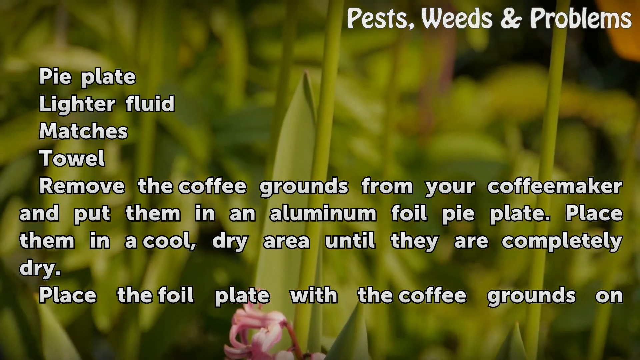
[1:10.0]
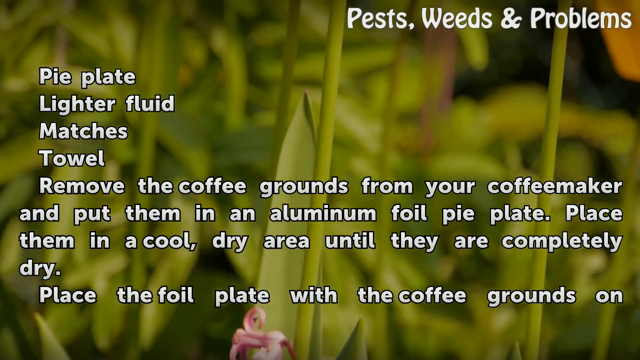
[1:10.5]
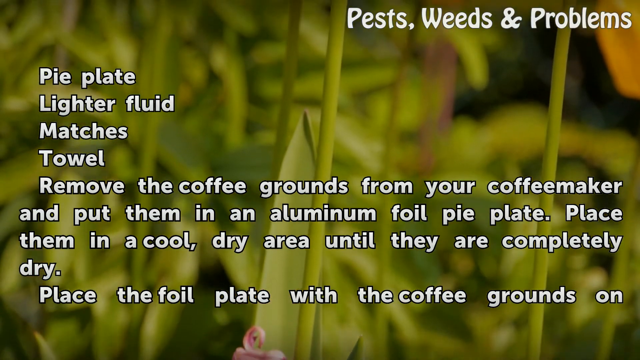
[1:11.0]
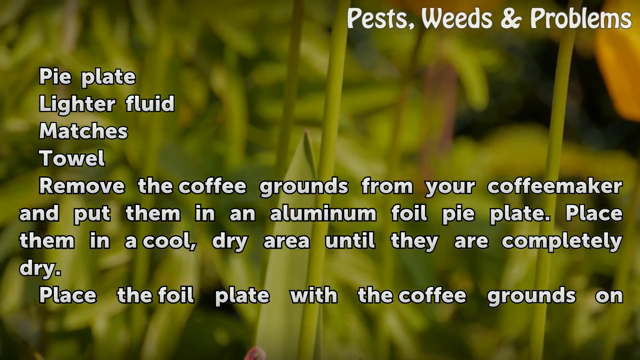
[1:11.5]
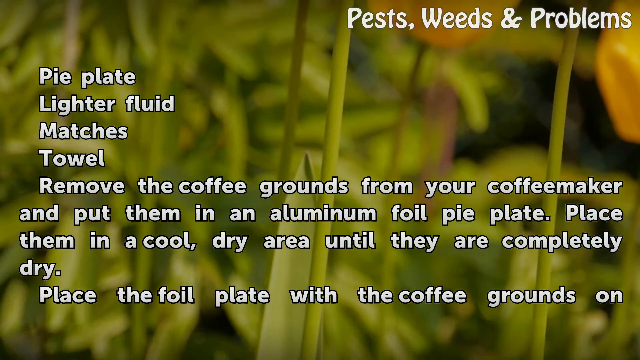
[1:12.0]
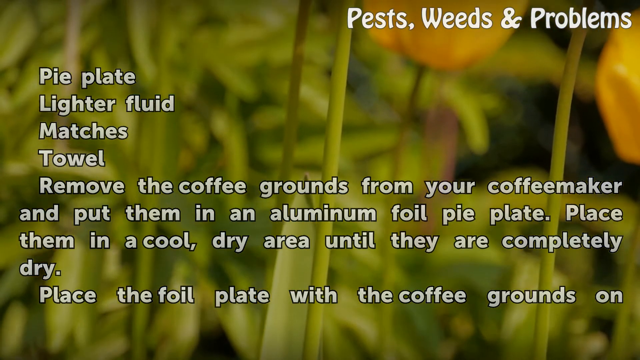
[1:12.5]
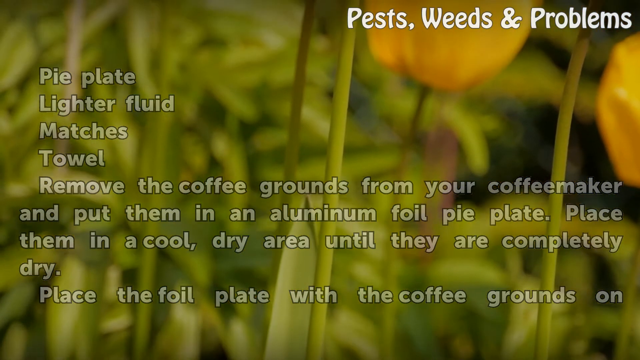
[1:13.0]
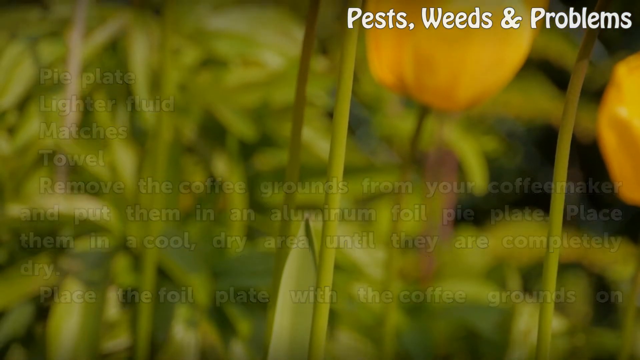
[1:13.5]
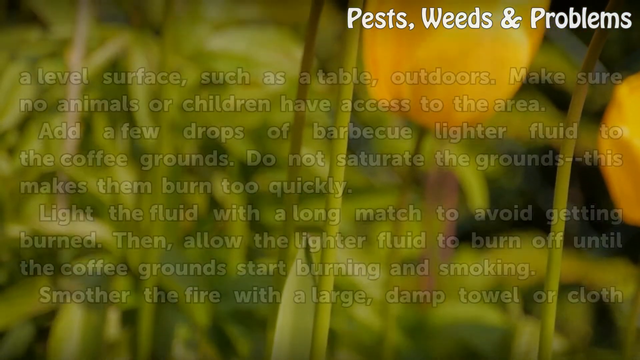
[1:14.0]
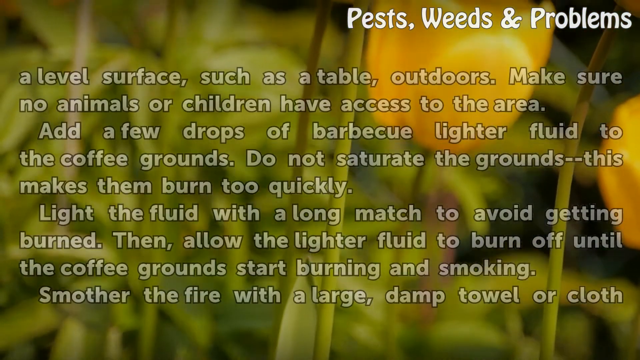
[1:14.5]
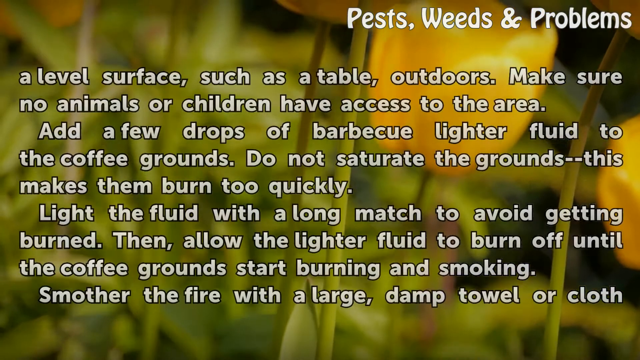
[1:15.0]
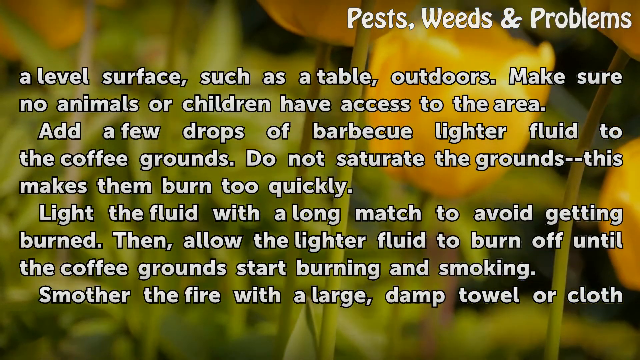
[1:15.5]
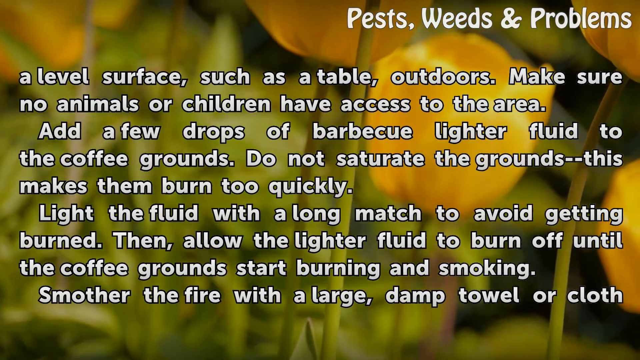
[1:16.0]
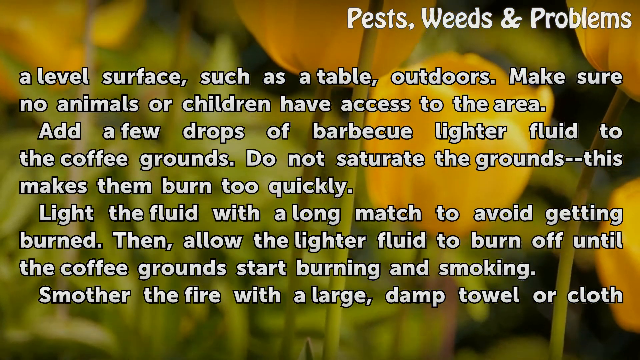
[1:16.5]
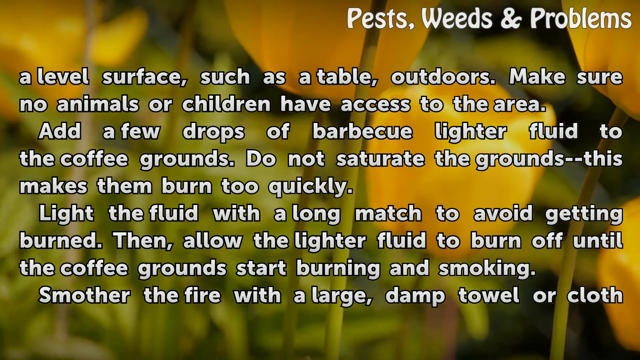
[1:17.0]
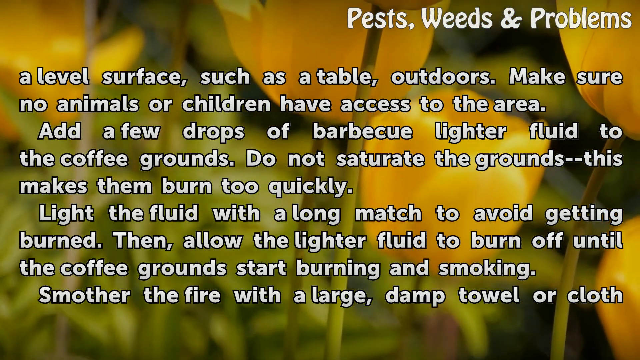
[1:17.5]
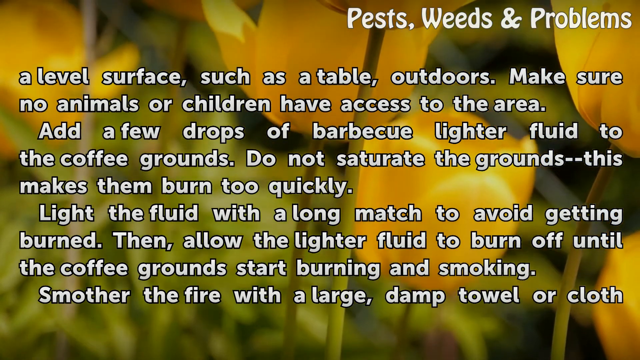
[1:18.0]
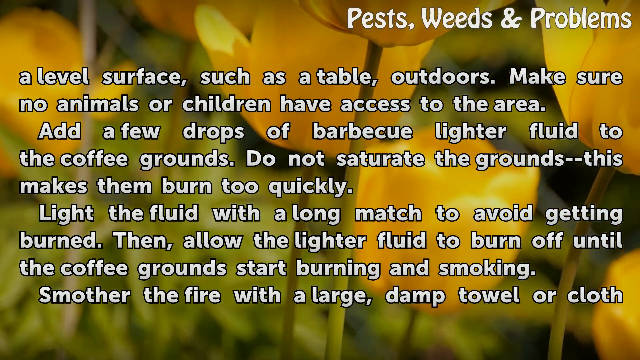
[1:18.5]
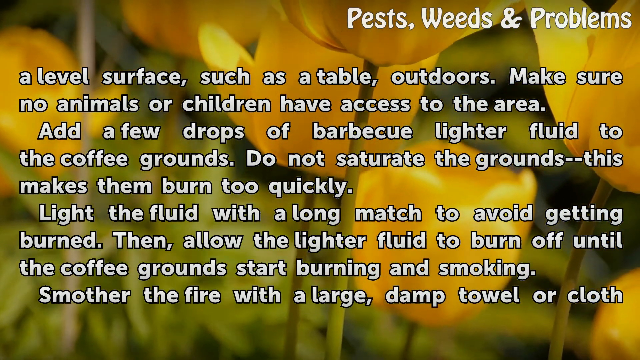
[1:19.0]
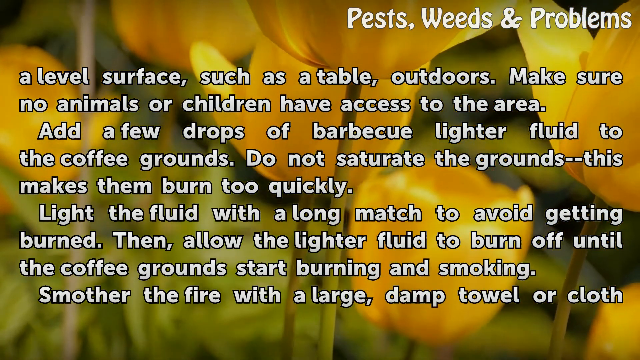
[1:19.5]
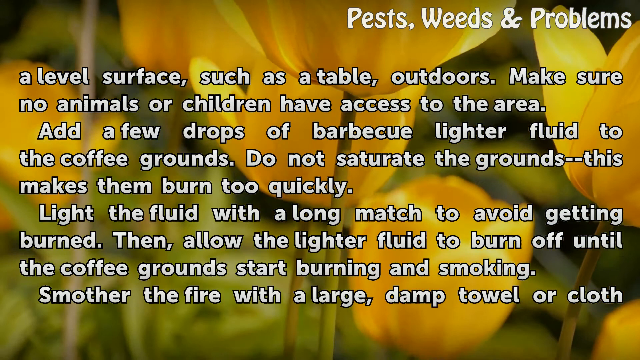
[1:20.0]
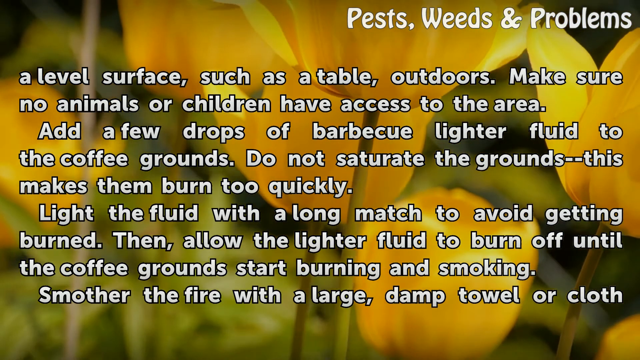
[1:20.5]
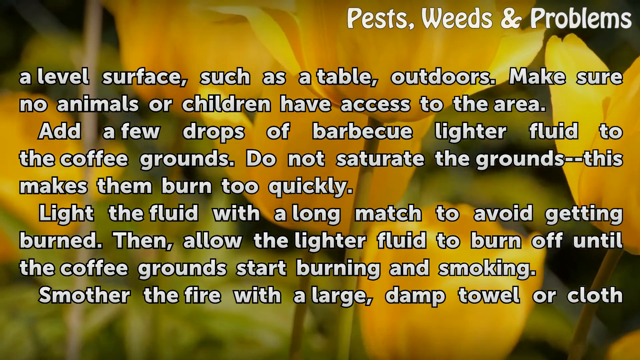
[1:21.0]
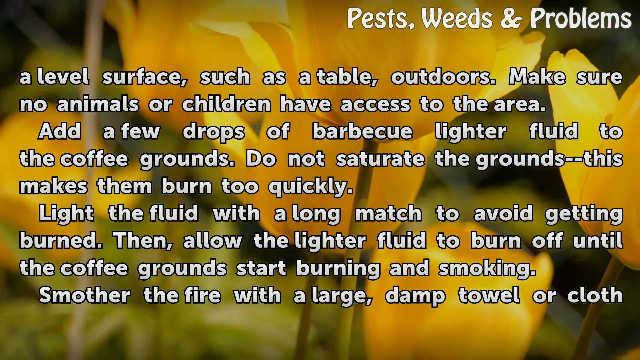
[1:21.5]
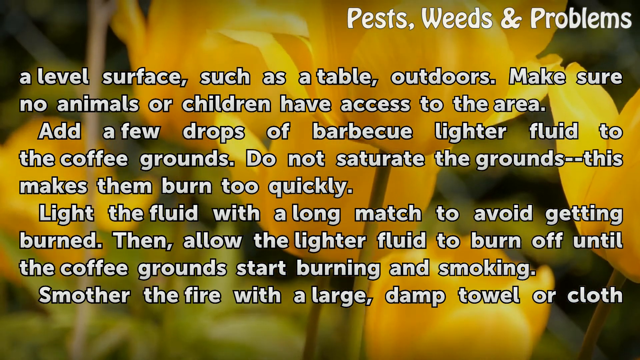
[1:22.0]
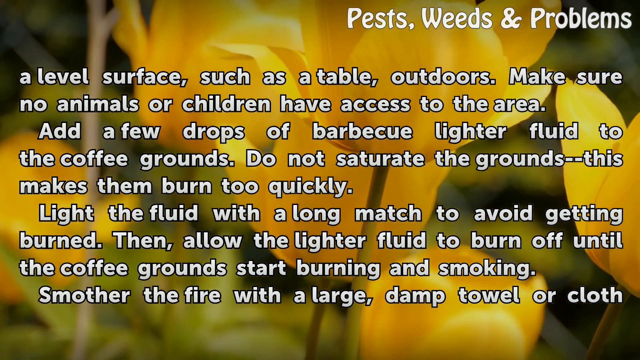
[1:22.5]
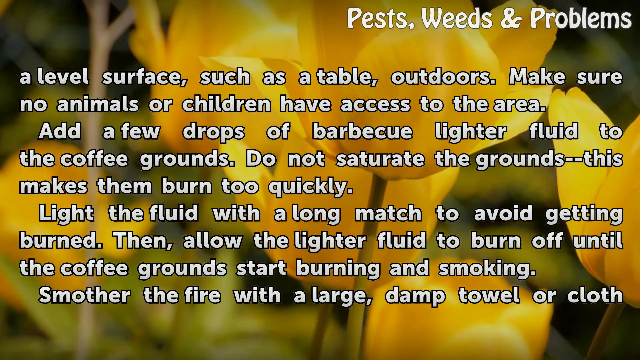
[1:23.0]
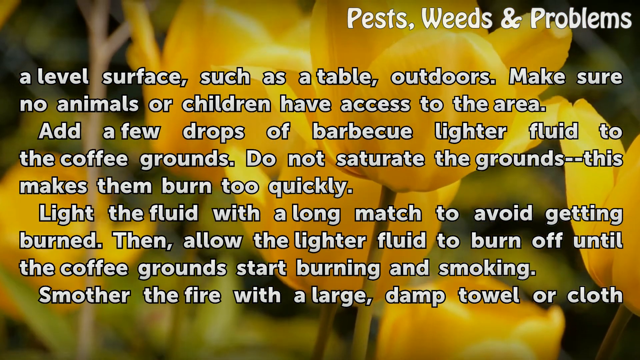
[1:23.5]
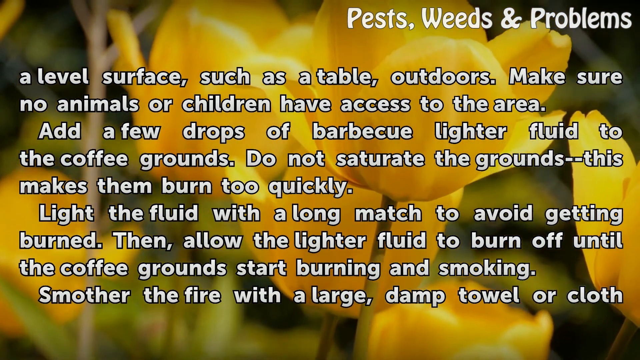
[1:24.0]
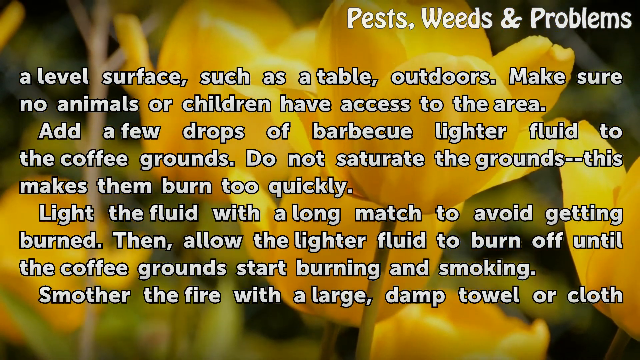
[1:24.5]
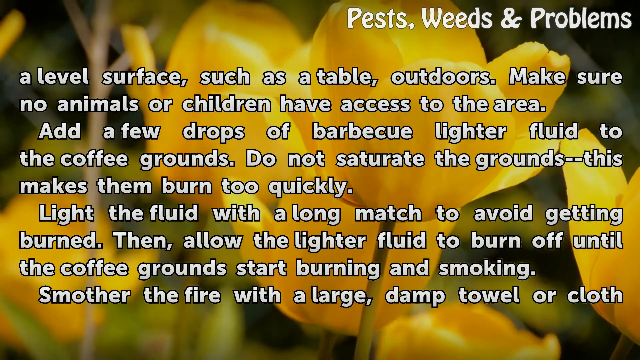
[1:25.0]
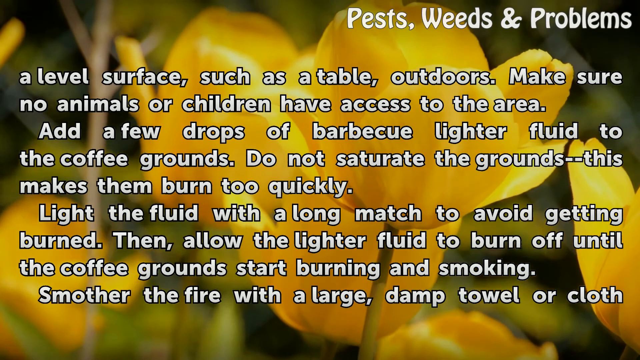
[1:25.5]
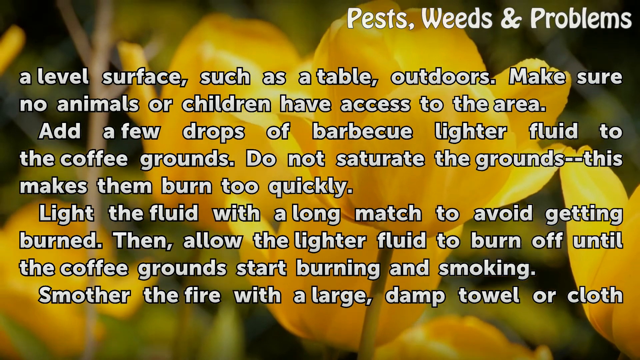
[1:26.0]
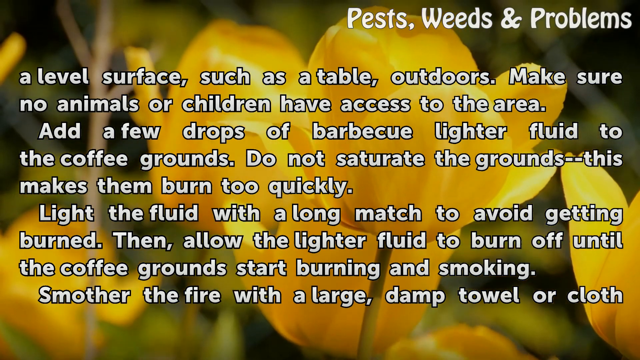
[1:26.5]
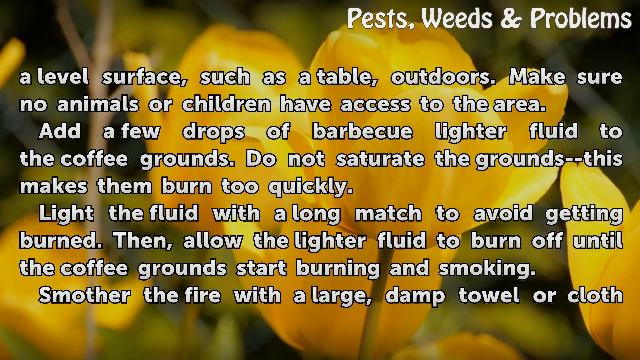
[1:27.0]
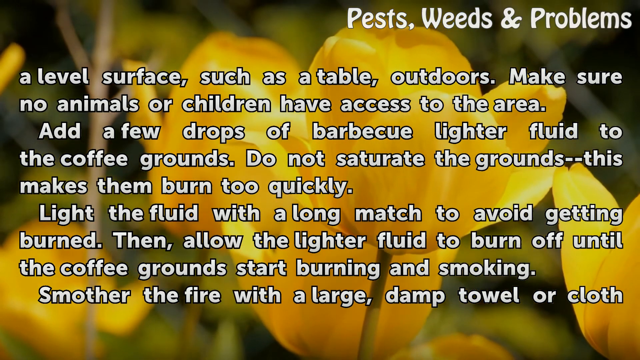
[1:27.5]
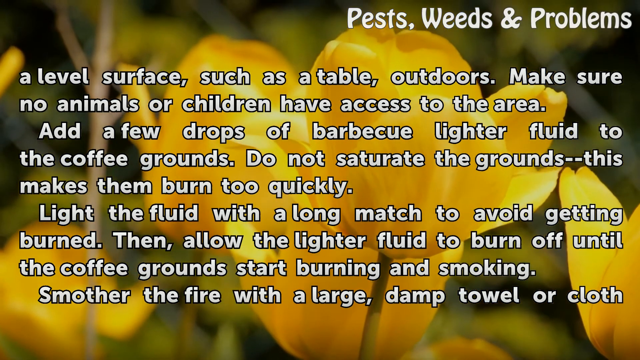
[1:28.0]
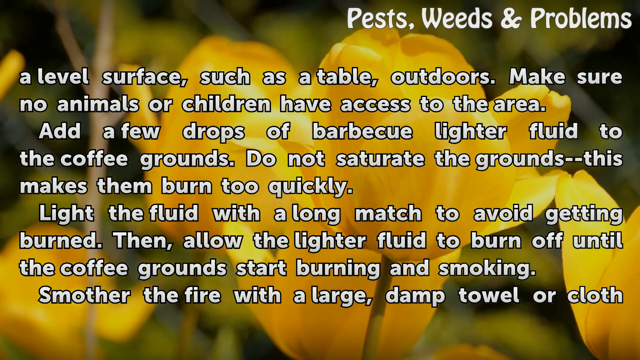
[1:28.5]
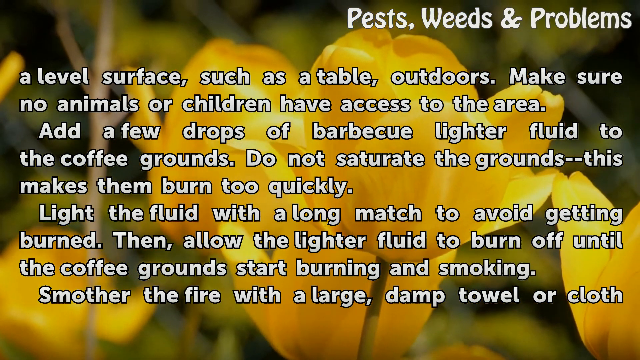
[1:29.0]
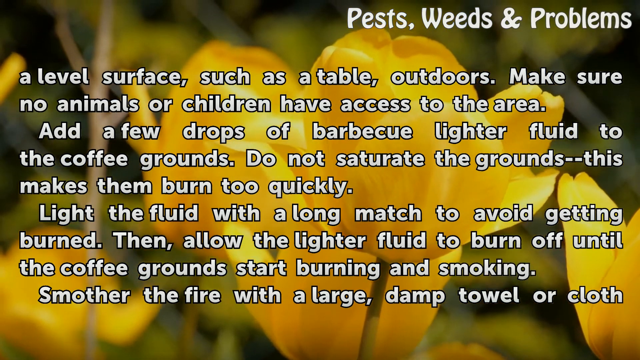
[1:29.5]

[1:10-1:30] The new background image looks like a close-up of green stems: a field of green with stems, leaves and maybe blades of grass. The camera slowly pans up, and yellowish flowers come into view. White text appears, continuing the earlier instructions: "on a level surface, such as a table, outdoors. Make sure no animals or children have access to the area. Add a few drops of barbecue lighter fluid to the coffee grounds. Do not saturate the grounds. This makes them burn too quickly. Light the fluid with a long match to avoid getting burned, then allow the lighter fluid to burn off until the coffee grounds start burning and smoking. Smother the fire with a large, damp towel or cloth." With the camera panned up, the yellow flowers sway slightly in the breeze, opened up as they bloom to the sunshine above.